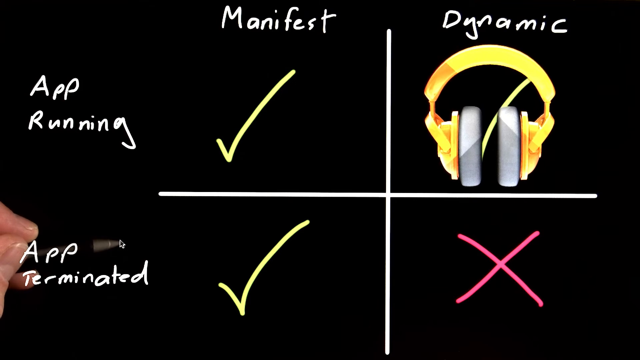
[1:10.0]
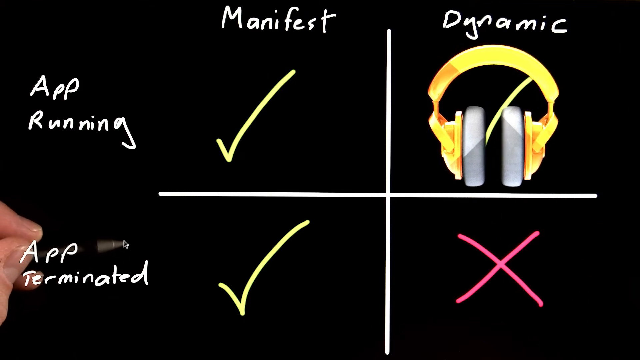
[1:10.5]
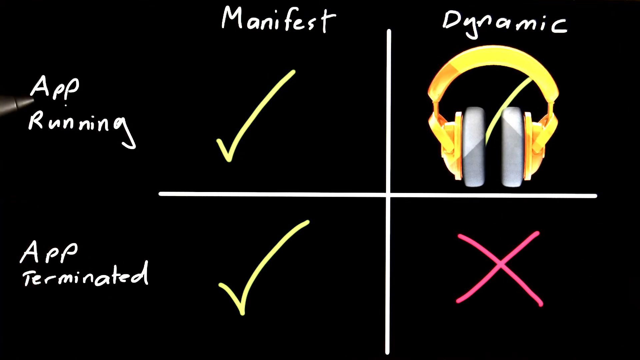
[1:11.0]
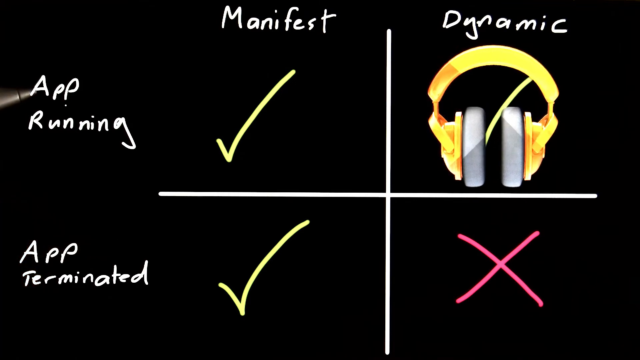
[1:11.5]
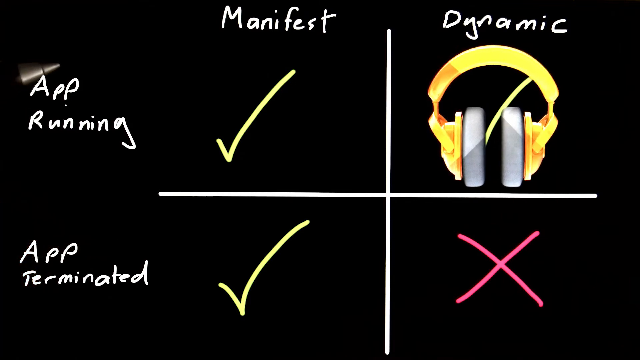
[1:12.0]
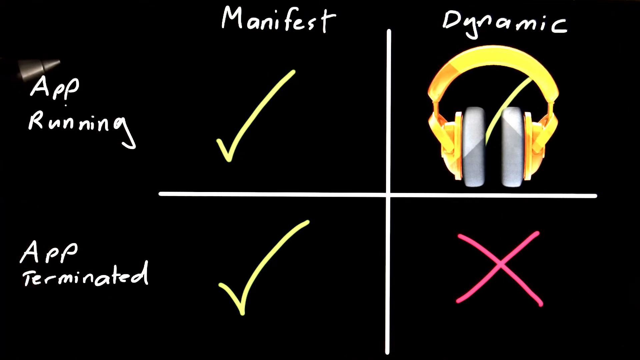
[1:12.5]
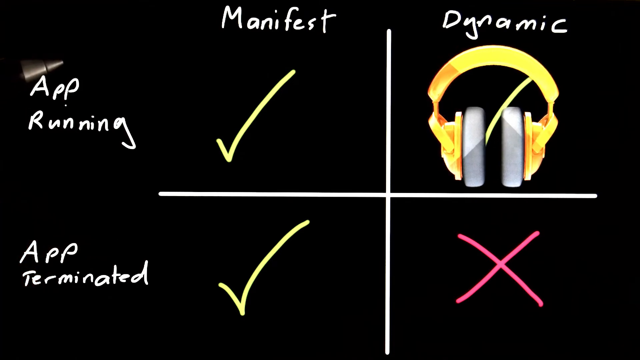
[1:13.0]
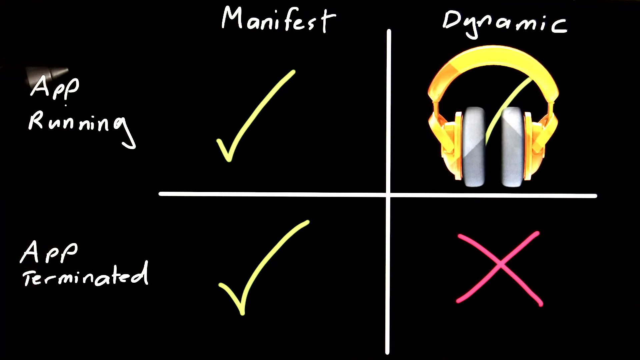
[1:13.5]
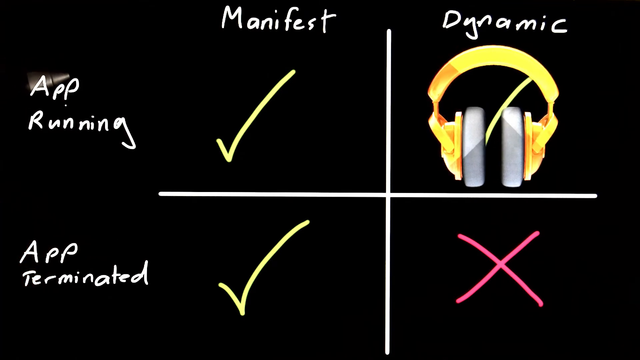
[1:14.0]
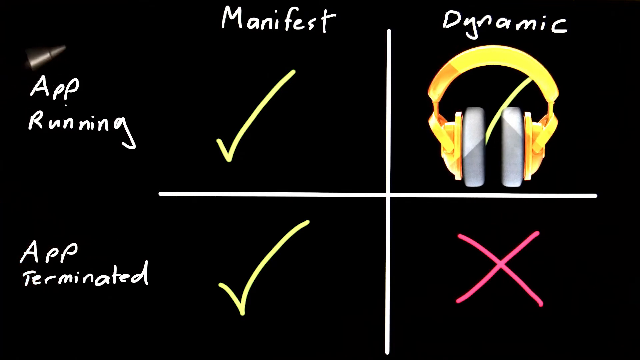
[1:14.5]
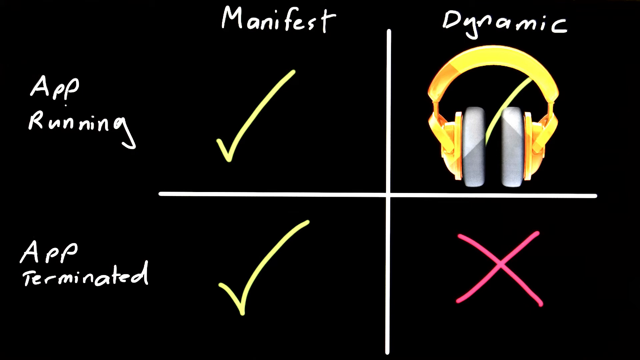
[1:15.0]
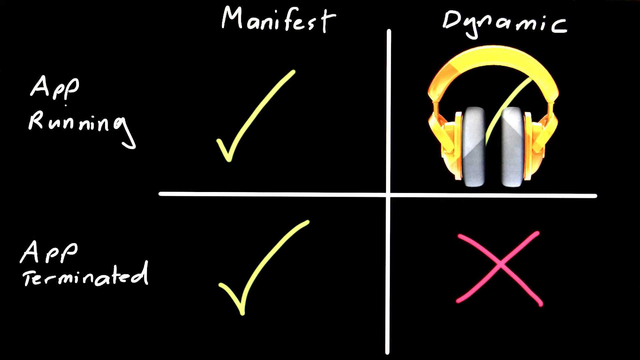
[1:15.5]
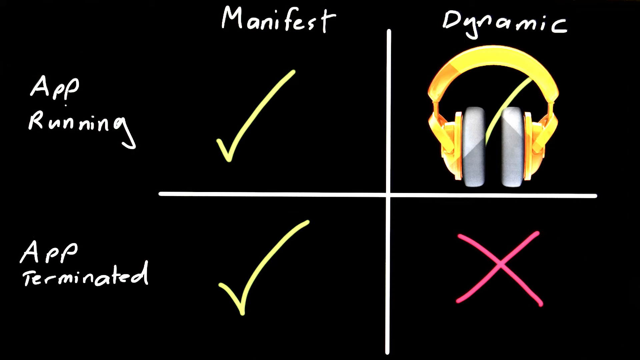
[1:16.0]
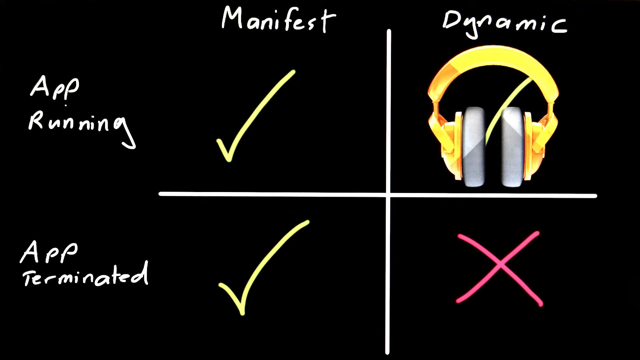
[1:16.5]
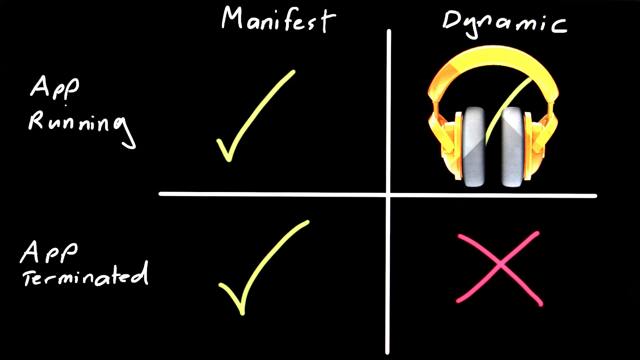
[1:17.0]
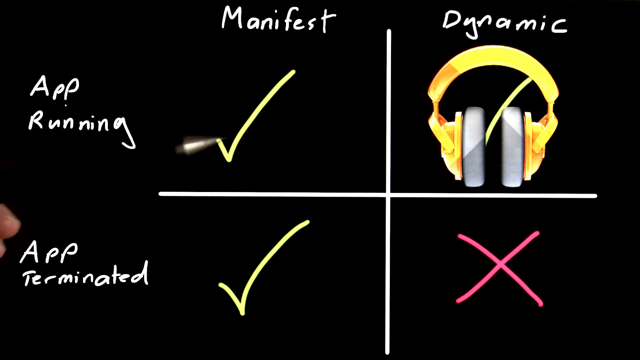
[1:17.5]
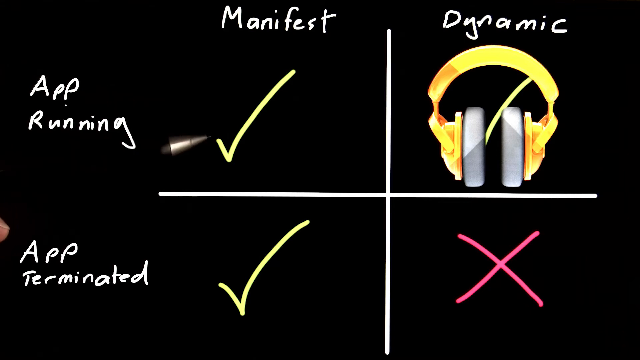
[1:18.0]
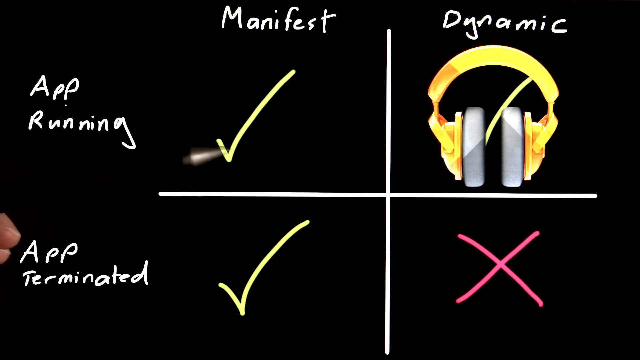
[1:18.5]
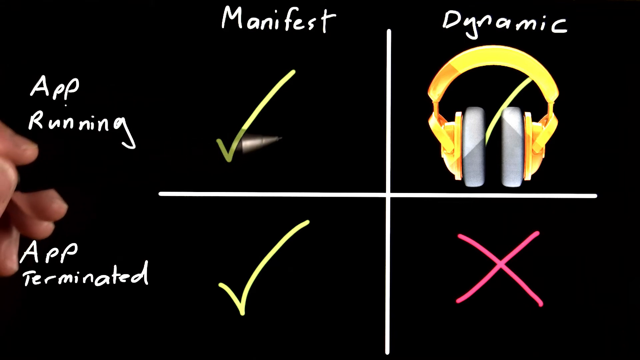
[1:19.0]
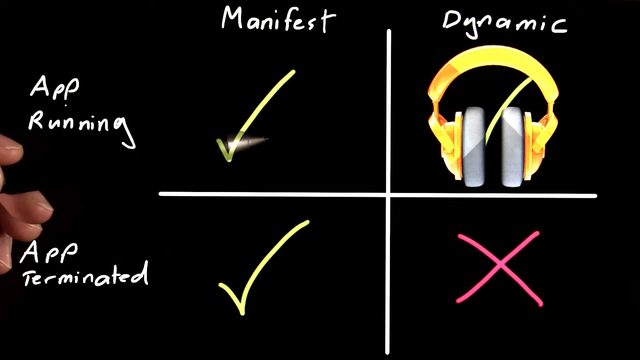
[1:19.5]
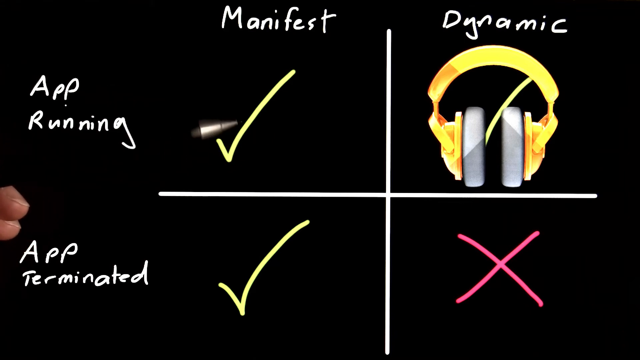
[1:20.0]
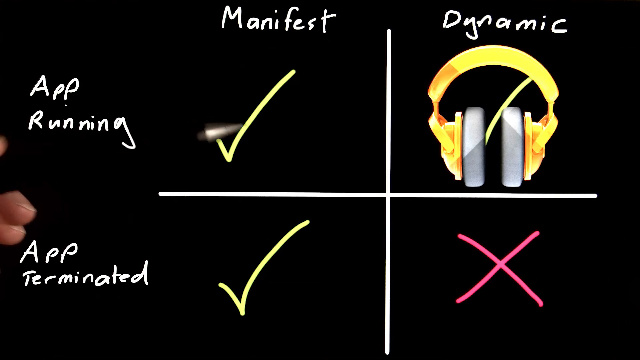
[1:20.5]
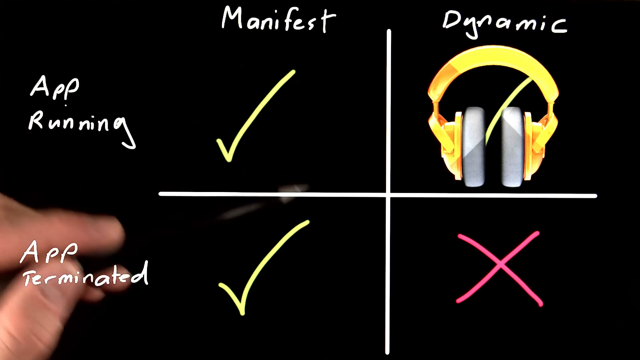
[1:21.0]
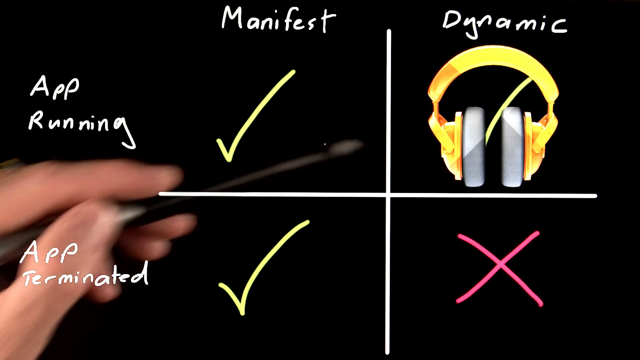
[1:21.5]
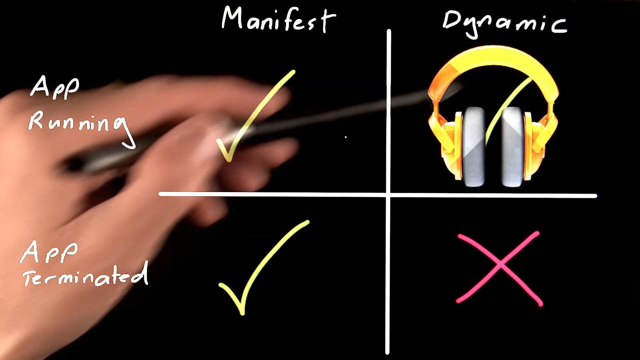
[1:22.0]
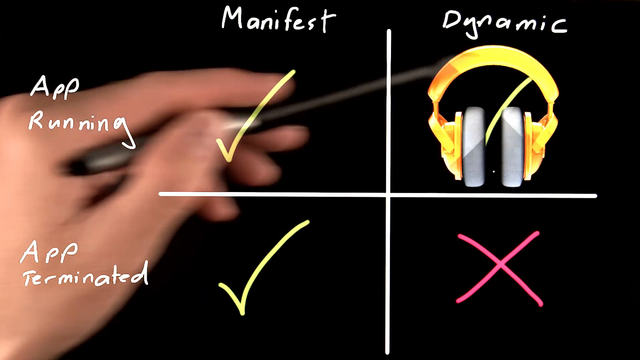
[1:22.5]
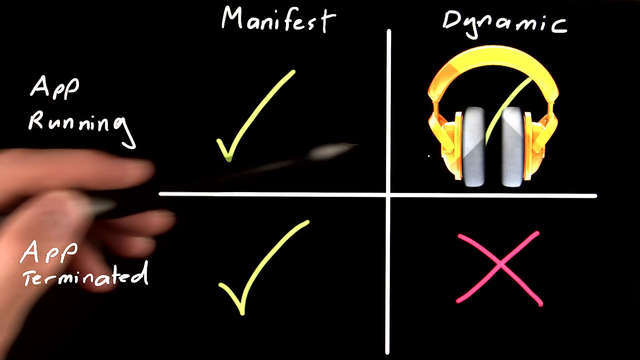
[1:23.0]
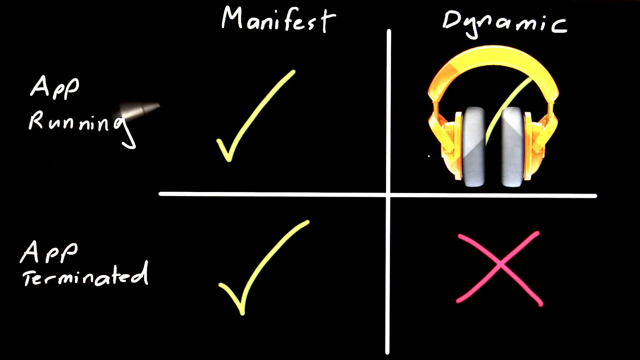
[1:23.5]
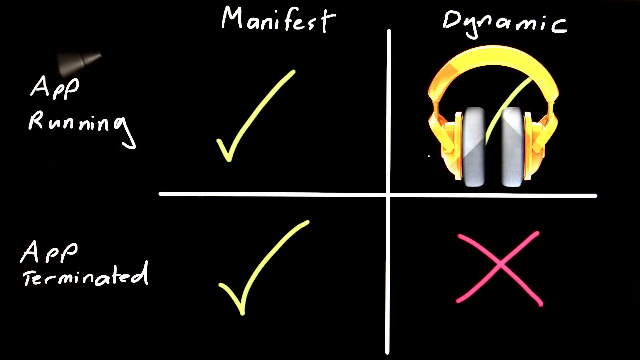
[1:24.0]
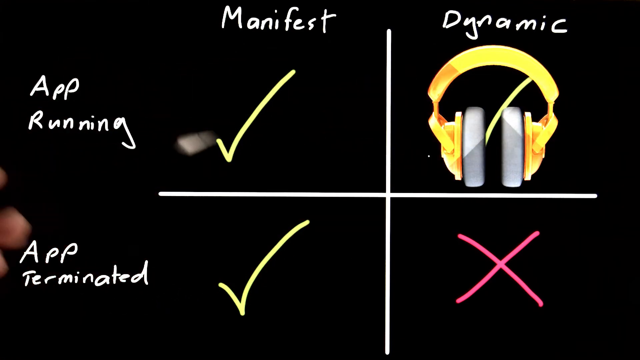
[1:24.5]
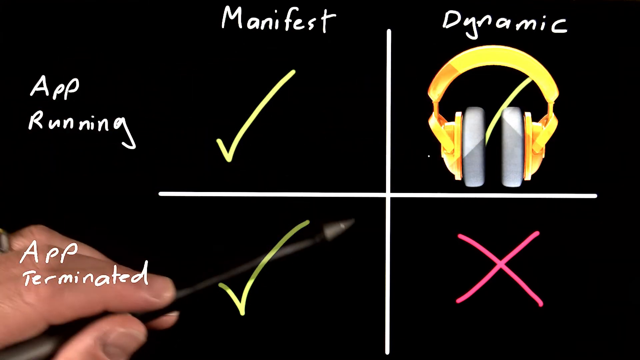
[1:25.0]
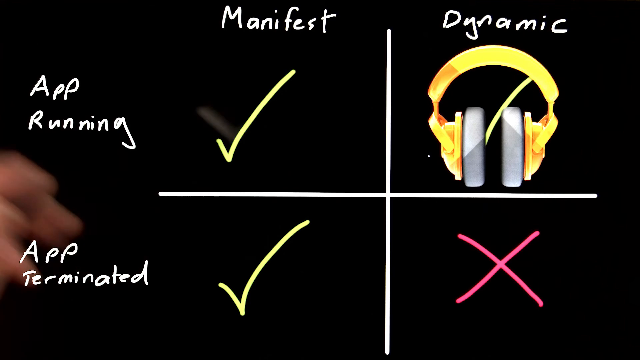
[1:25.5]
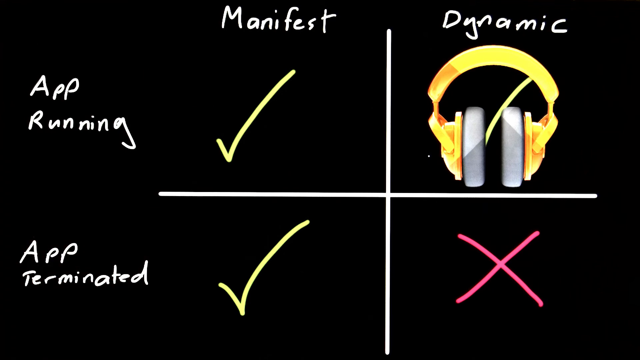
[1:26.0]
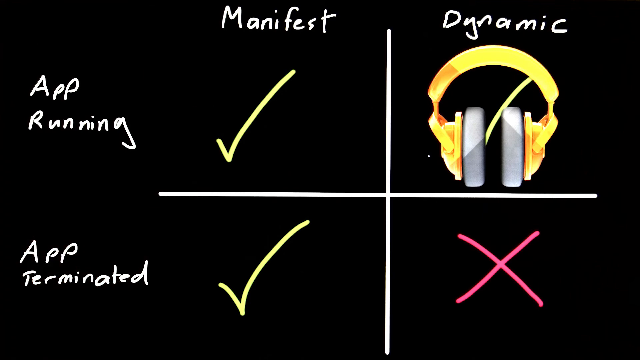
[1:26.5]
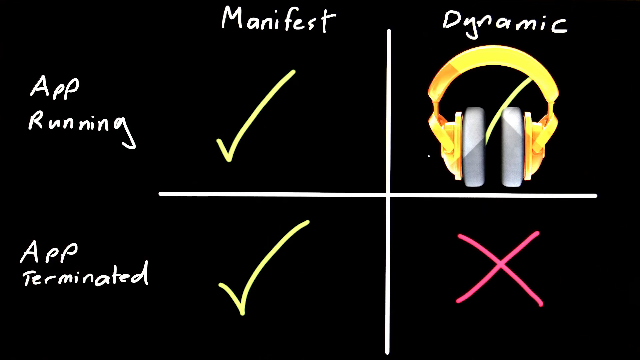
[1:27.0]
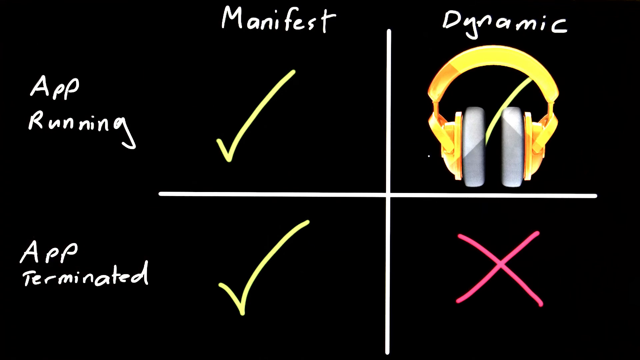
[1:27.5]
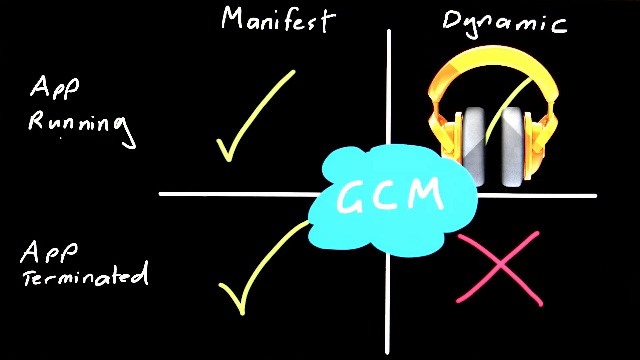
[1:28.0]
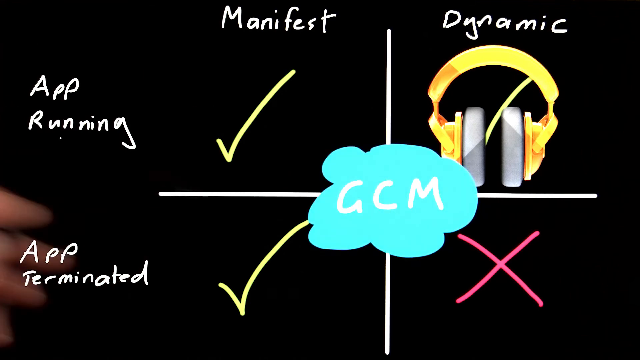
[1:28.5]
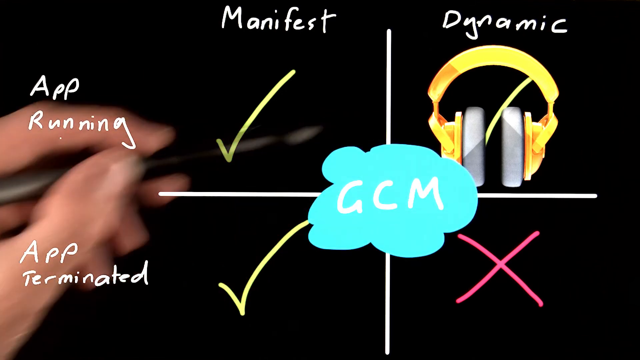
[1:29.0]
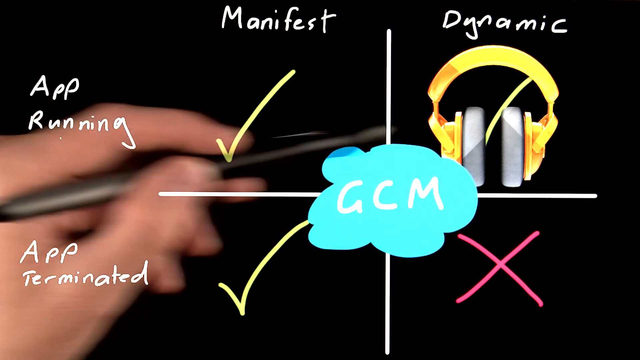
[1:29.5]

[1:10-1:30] A set of headphones has been placed in a box with a green checkmark, underneath the "dynamic" tag and across from the "app running" tag: "app running" is to the left, "dynamic" is up to the upper right, and the box connecting them holds the headphones. The person making the video has a pen, seen moving around on the left side of the video; eventually the pen moves farther into the center of the screen, and the hand moves around in kind of a circular motion, pointing to the center. A little blue cloud or word bubble then appears in the center of the screen with the capital letters "GCM" inside it. The video is apparently showing how someone writes or programs an app.